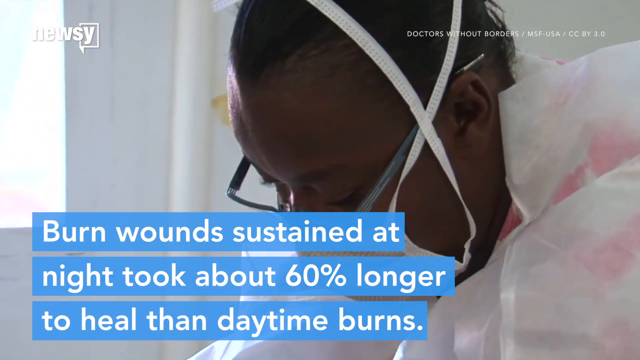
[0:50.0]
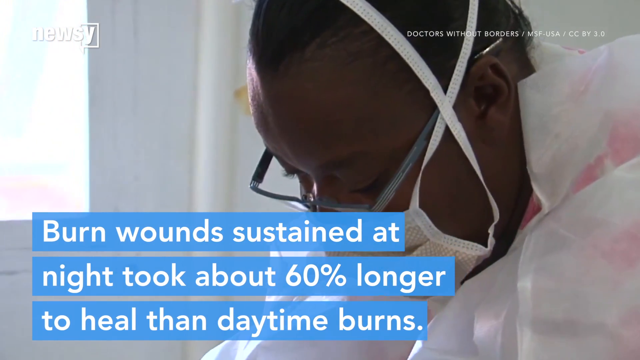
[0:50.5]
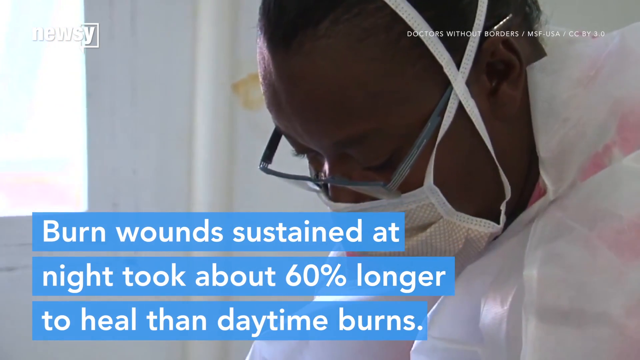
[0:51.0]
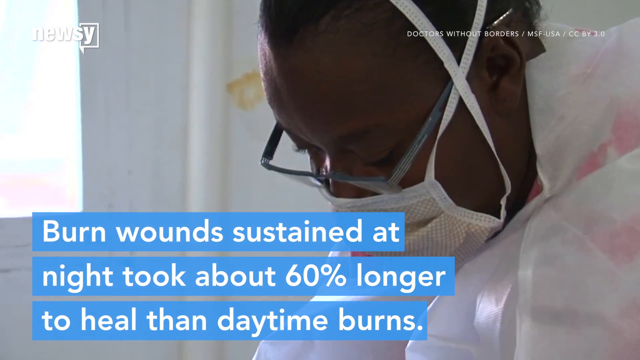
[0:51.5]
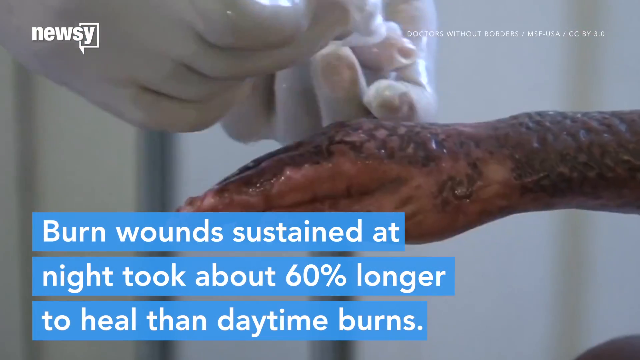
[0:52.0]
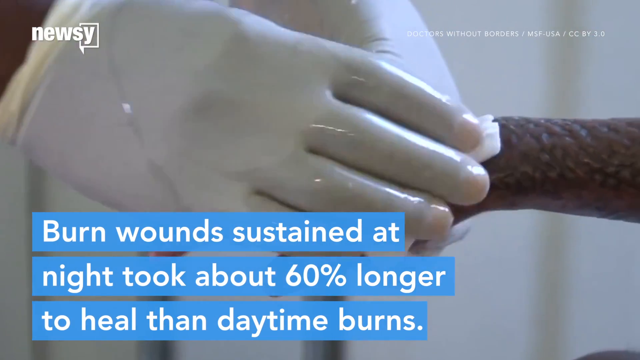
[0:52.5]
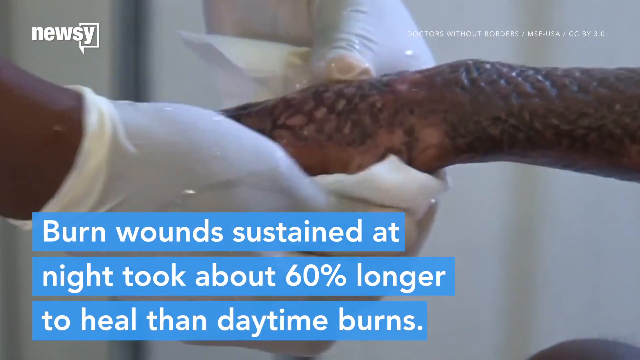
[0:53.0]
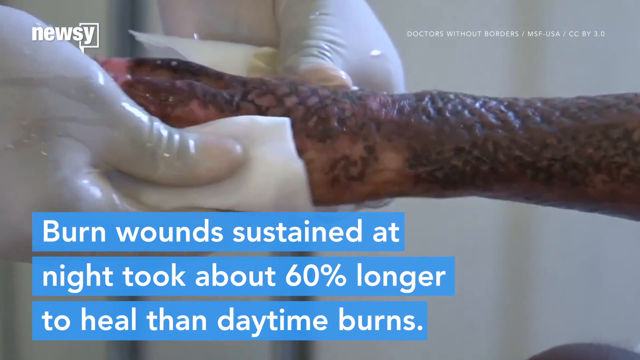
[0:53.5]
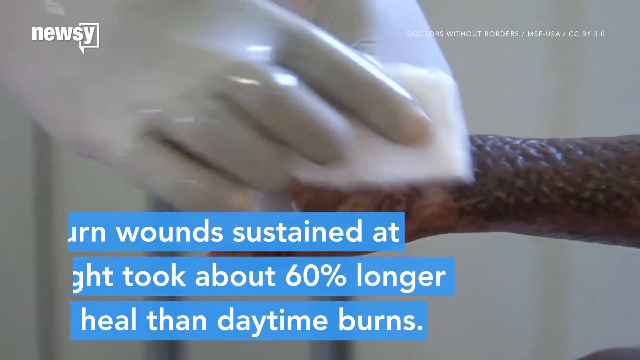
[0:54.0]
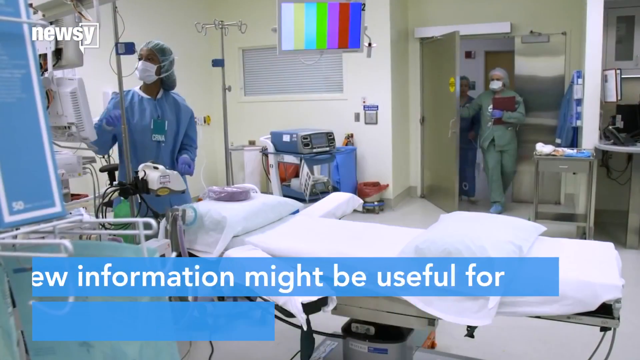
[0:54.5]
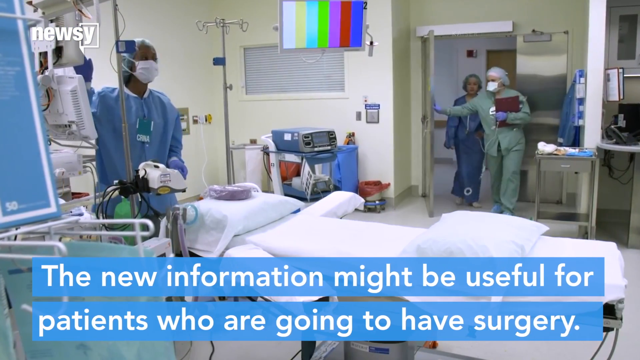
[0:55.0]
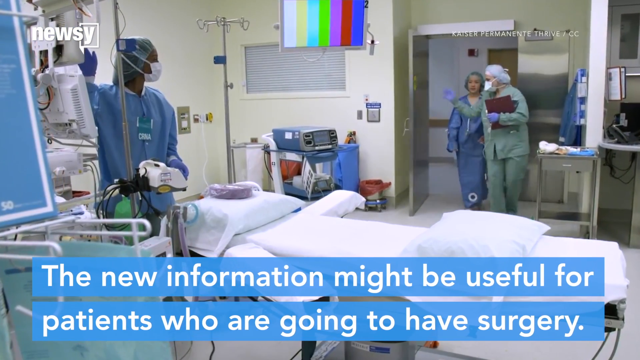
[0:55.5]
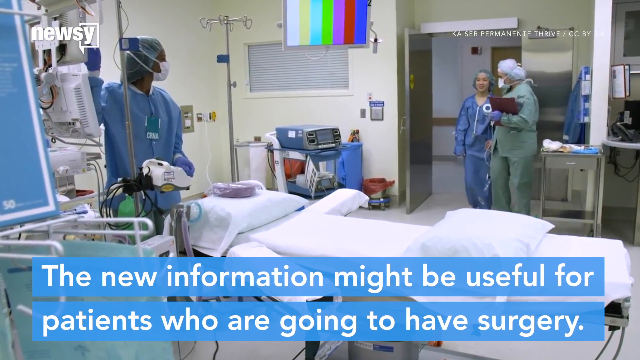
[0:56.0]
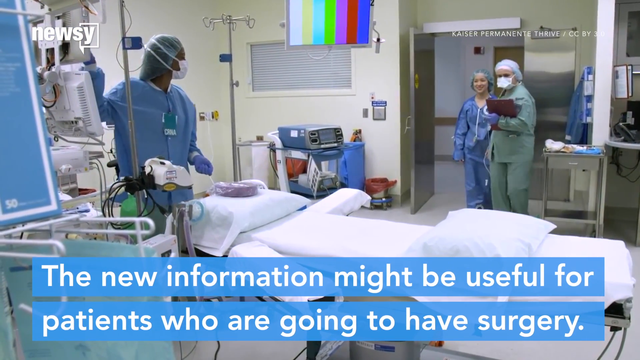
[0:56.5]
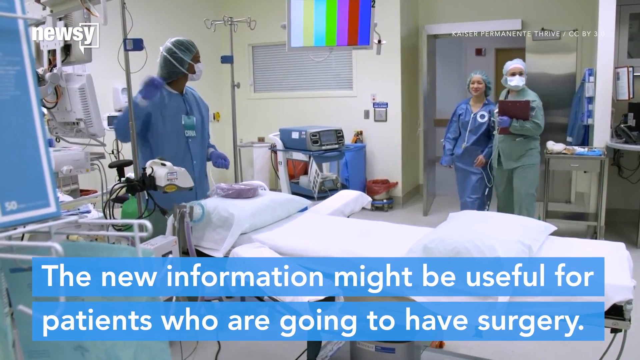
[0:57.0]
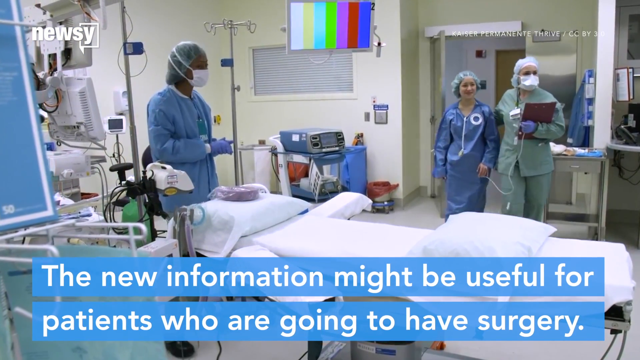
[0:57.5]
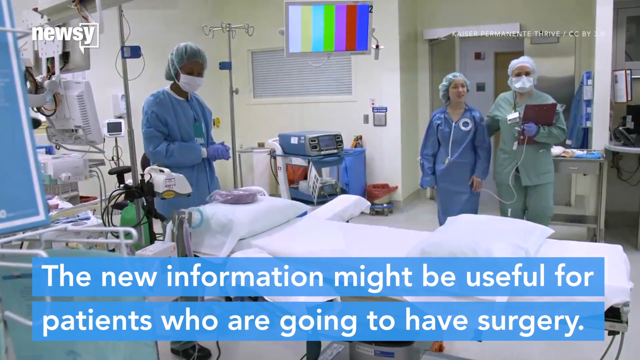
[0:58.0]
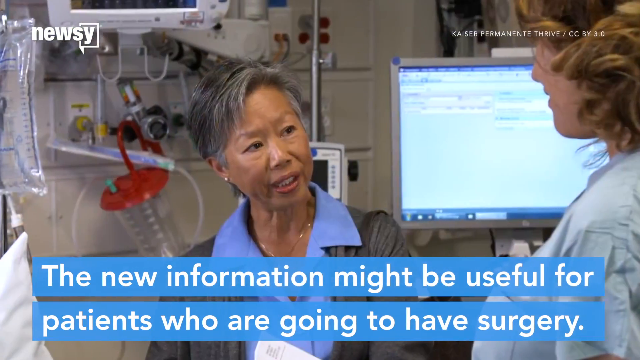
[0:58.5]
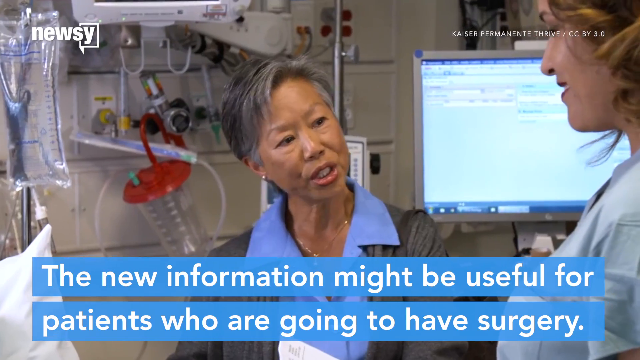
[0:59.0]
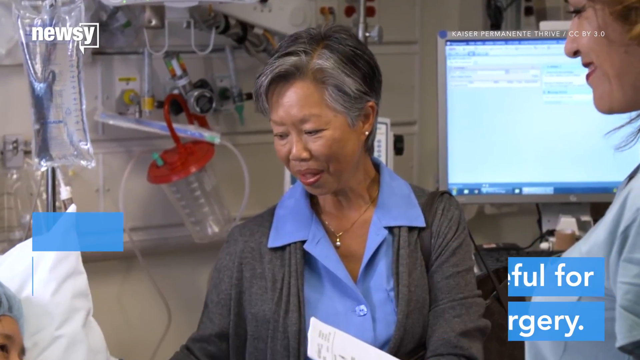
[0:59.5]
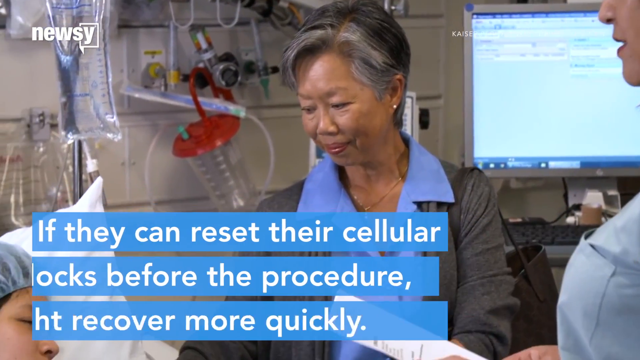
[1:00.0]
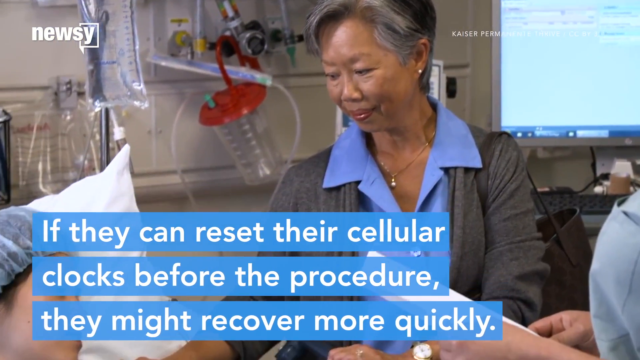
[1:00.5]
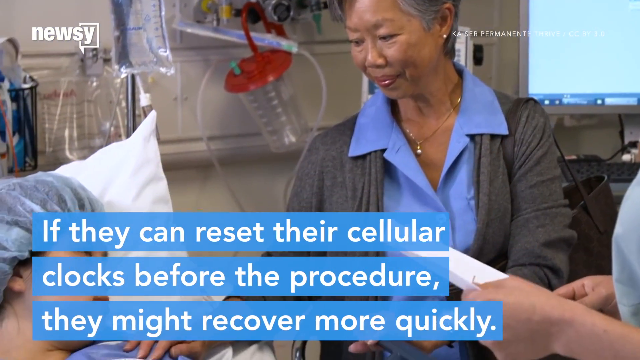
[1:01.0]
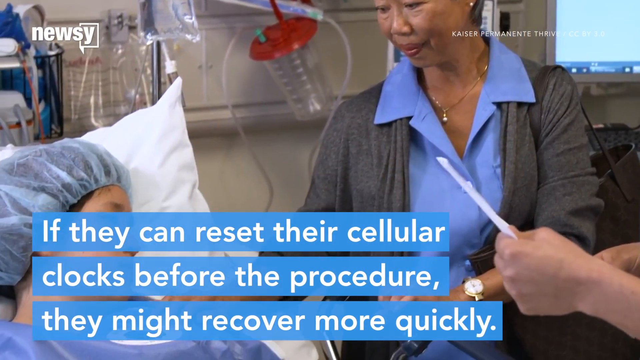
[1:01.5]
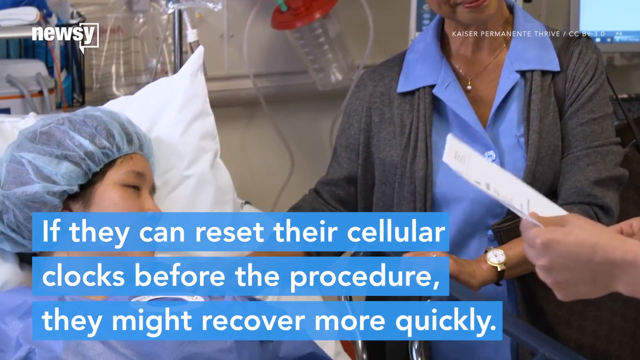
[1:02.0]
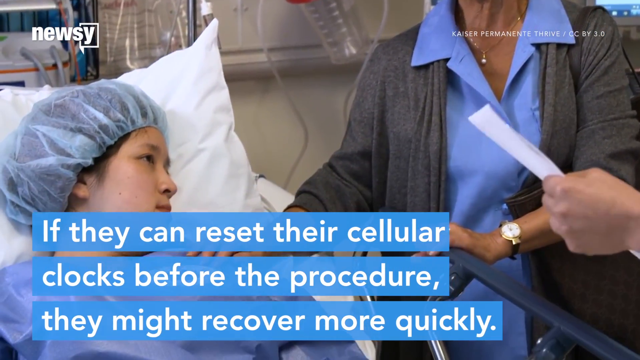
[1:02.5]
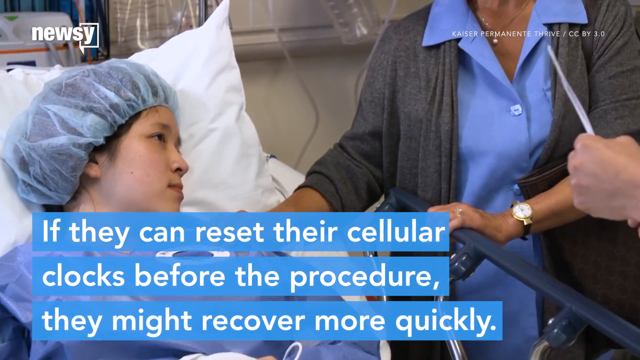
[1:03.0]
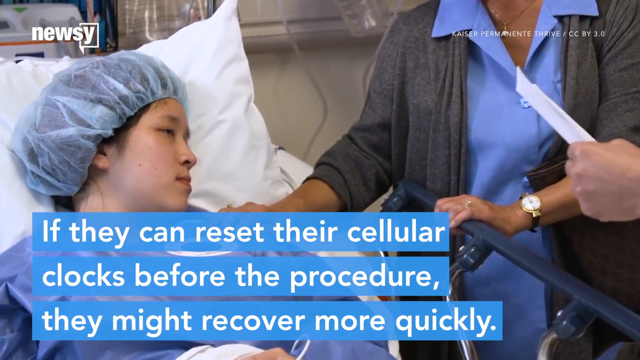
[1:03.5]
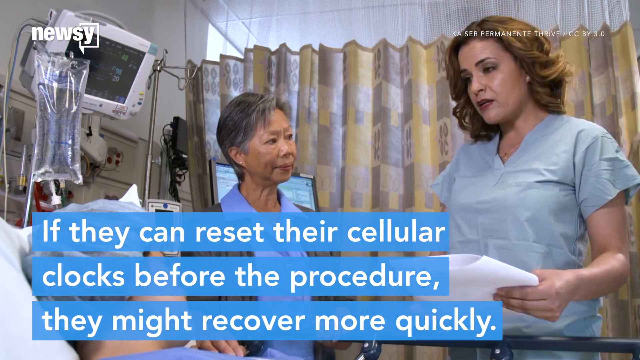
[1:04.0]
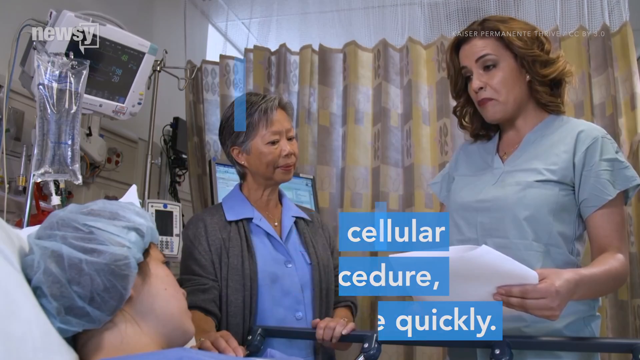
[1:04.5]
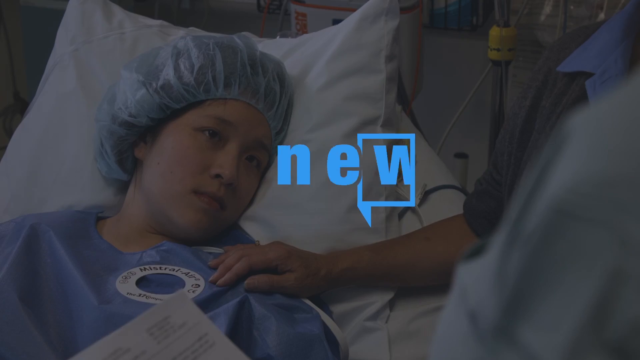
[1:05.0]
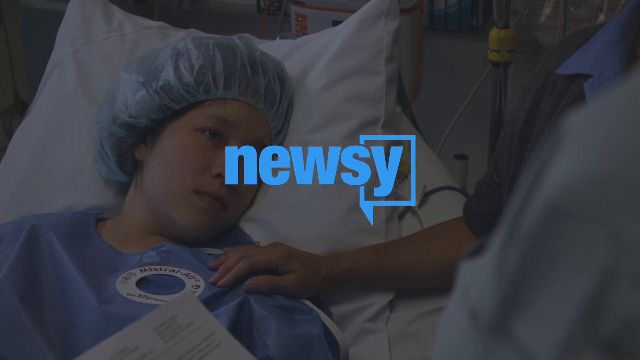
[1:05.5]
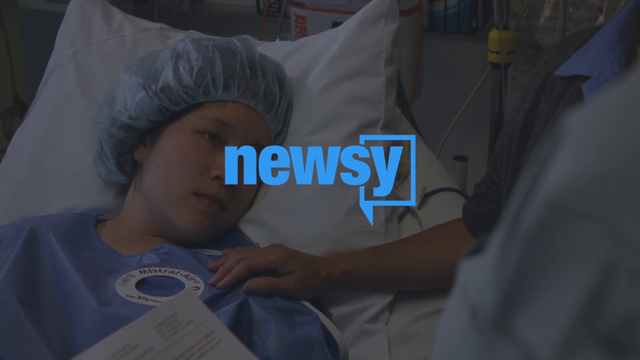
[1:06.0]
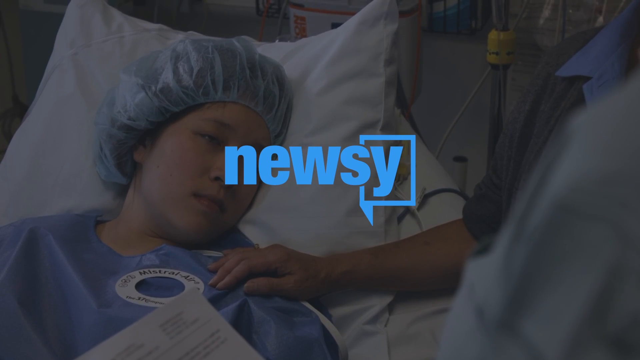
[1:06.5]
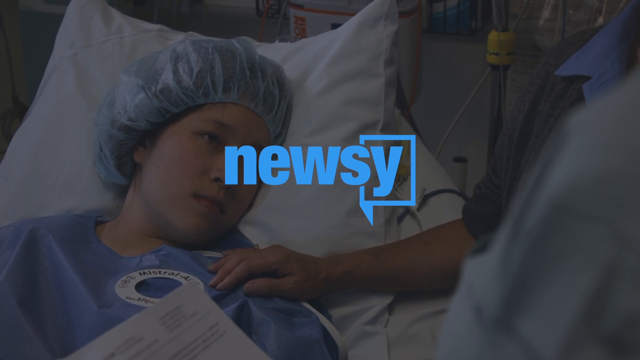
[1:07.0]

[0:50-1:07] A doctor wearing medical gloves cleans a patient who has burn marks all over their hand. Next is an operating room in a hospital with three doctors, two by the door and one setting up a station next to a patient bed. The text at the bottom says "the new information might be useful for patients who are going to have surgery." The video cuts to another operating room where two doctors speak to each other; there is a computer monitor in the back, possibly with a nurse, and a lot of medical equipment in the background. The camera pans to a patient wearing a hairnet on a hospital bed. The text overlay changes to "if they can reset their cellular clocks before the procedure they might recover more quickly." The parting shot shows a nurse or doctor speaking to a patient in a hospital bed, next to either another nurse or the patient's mother. The video then cuts to a Newsy logo in the center of the frame.